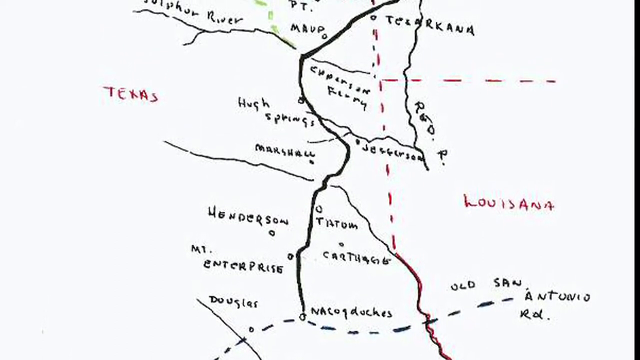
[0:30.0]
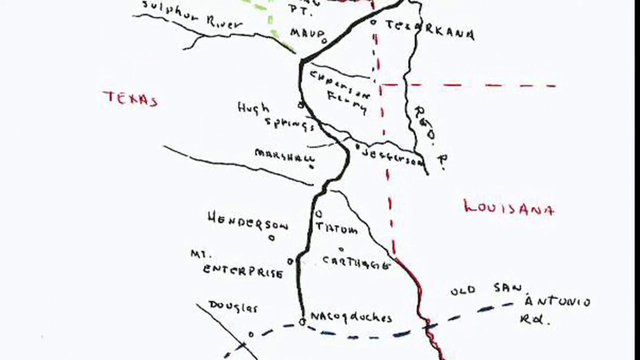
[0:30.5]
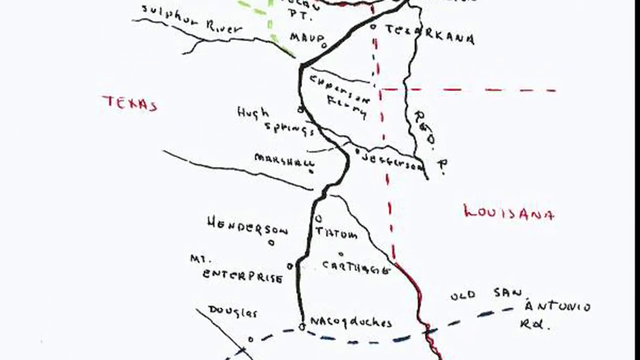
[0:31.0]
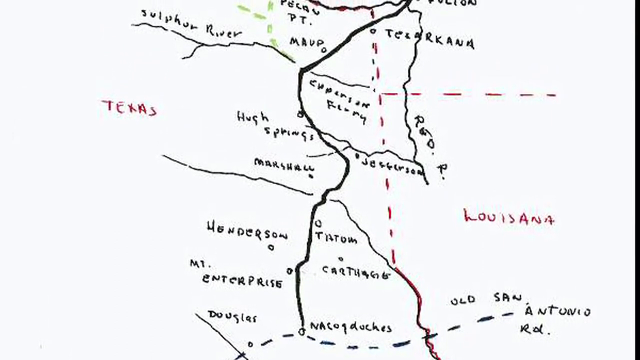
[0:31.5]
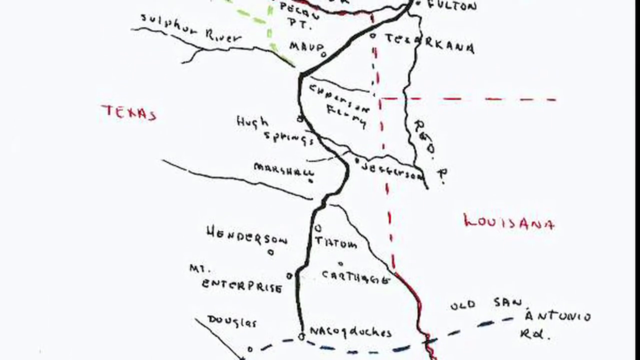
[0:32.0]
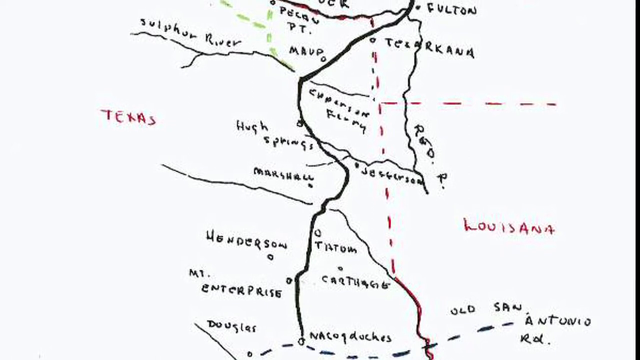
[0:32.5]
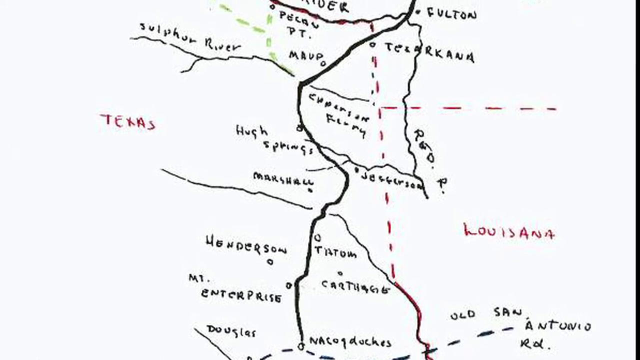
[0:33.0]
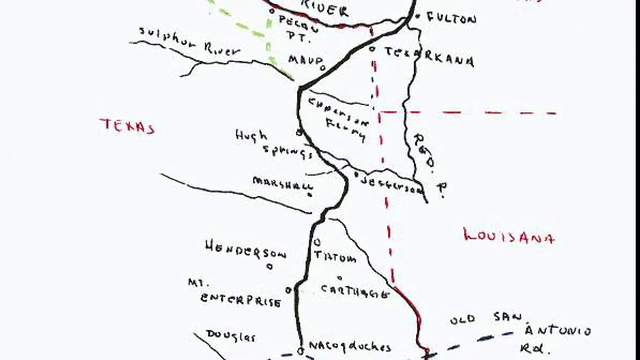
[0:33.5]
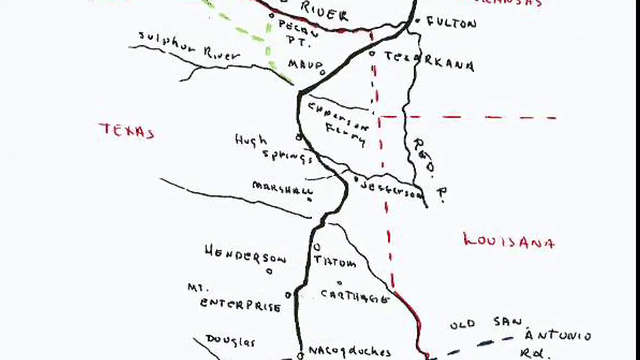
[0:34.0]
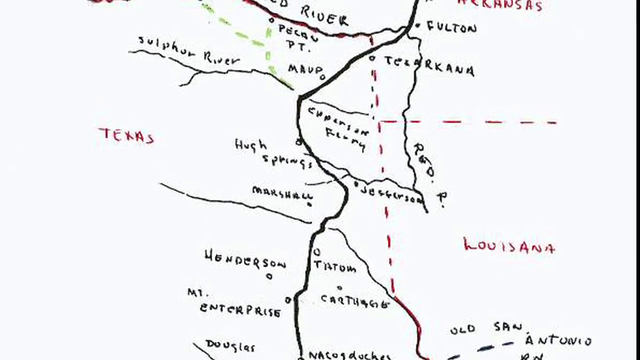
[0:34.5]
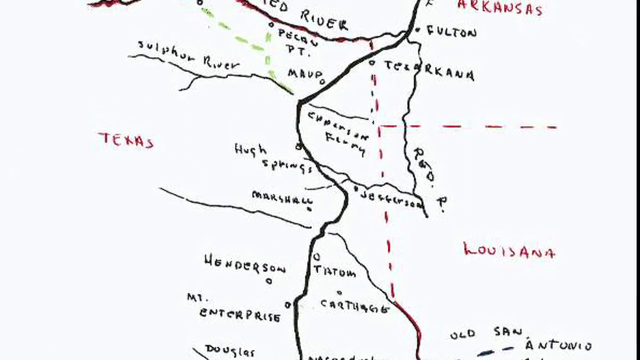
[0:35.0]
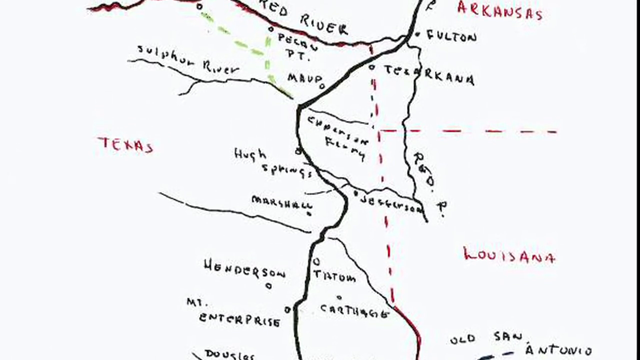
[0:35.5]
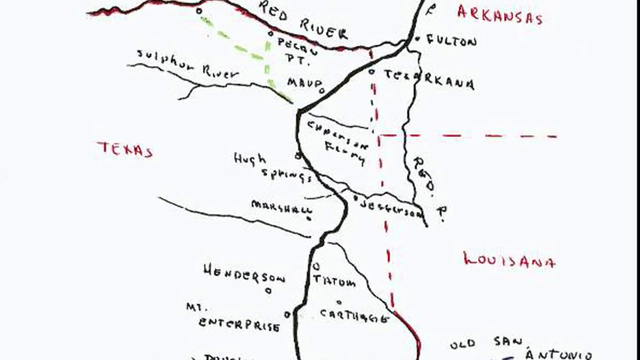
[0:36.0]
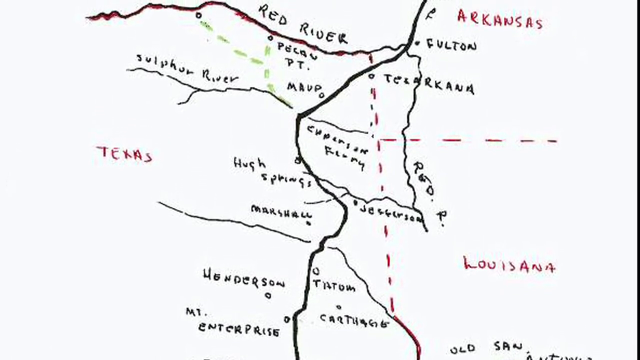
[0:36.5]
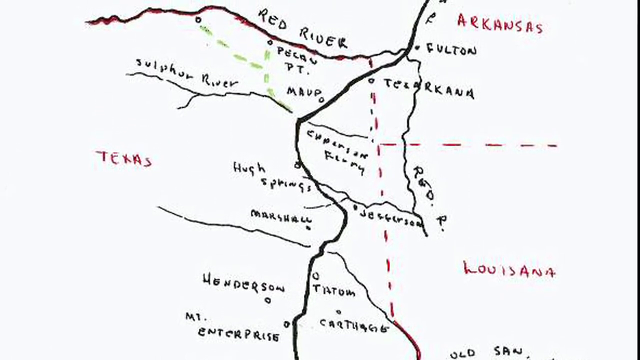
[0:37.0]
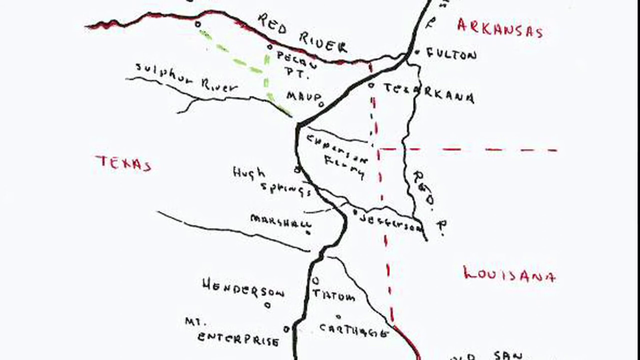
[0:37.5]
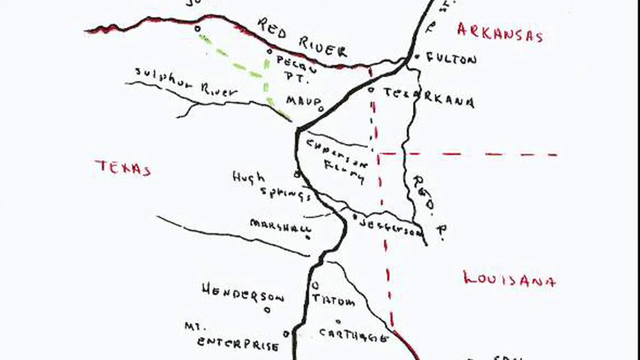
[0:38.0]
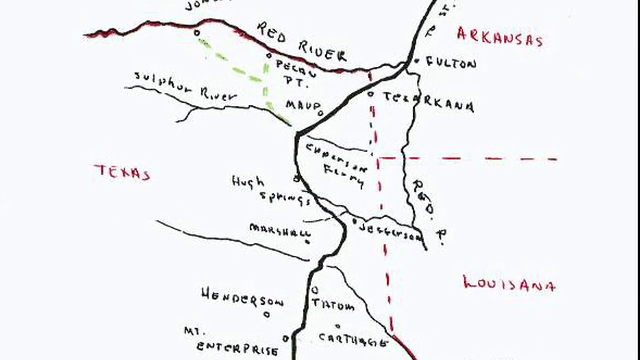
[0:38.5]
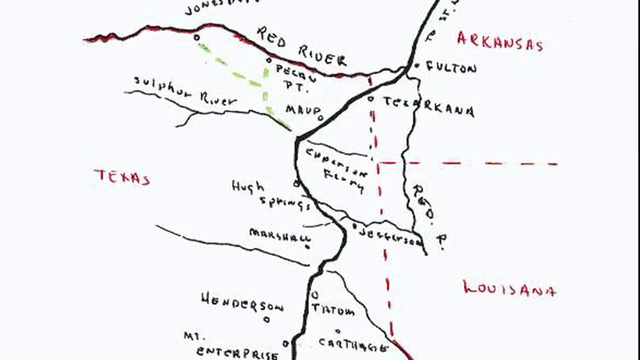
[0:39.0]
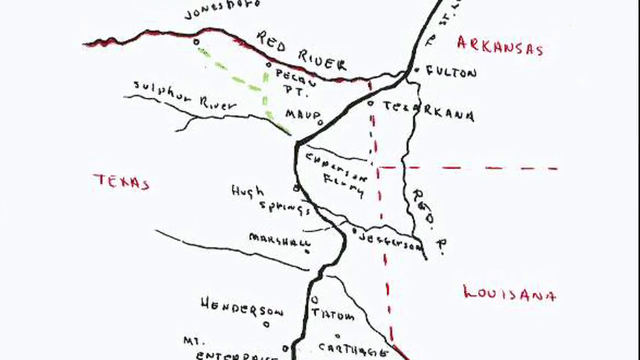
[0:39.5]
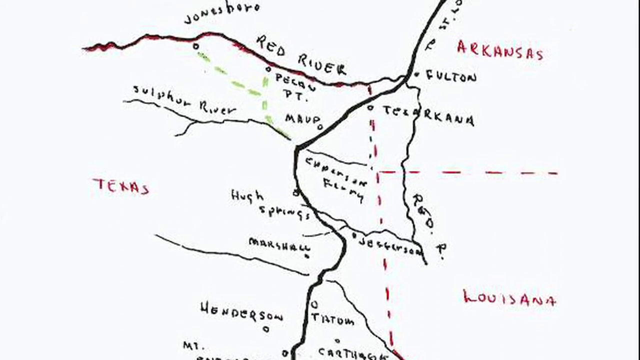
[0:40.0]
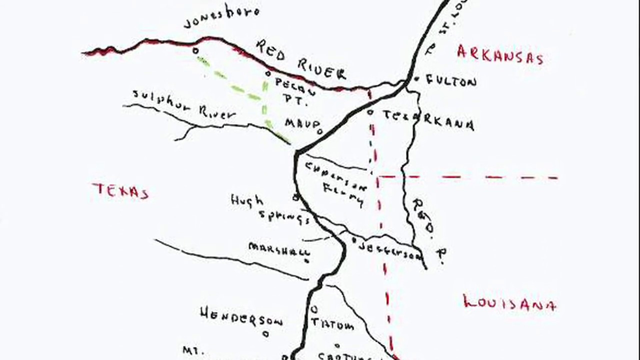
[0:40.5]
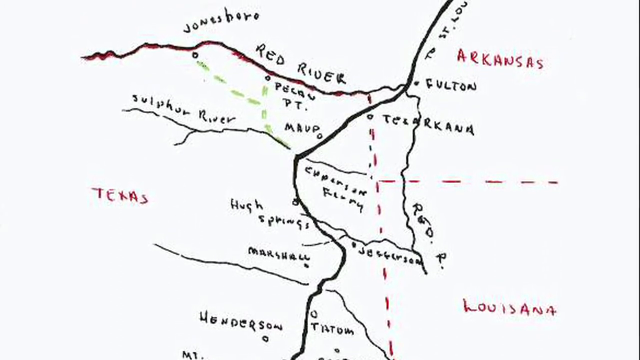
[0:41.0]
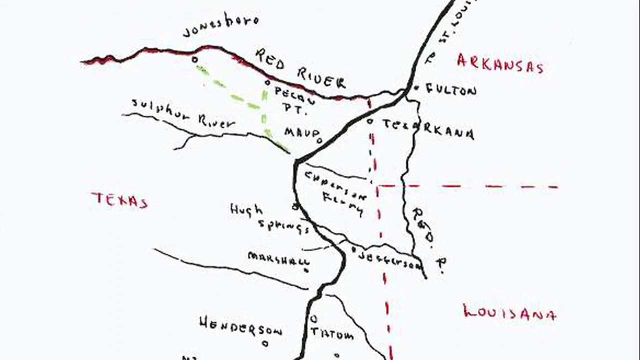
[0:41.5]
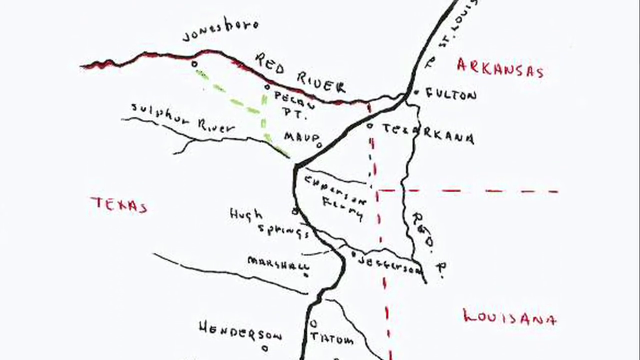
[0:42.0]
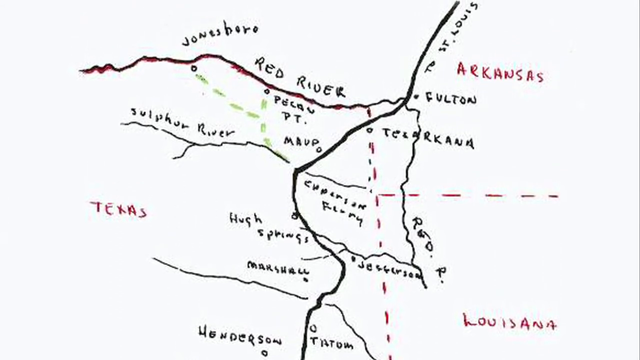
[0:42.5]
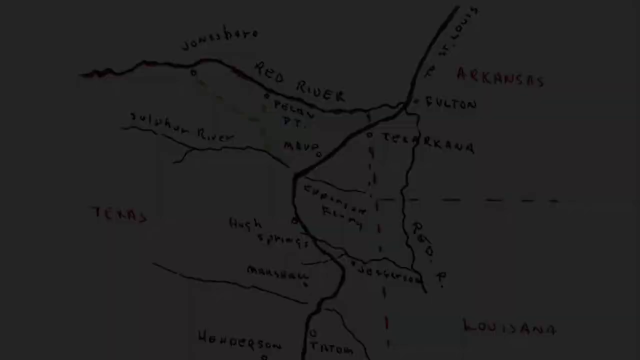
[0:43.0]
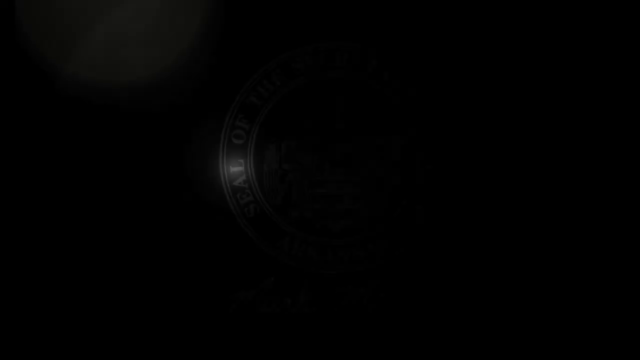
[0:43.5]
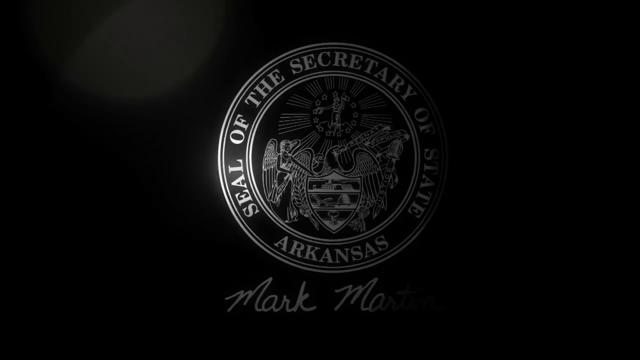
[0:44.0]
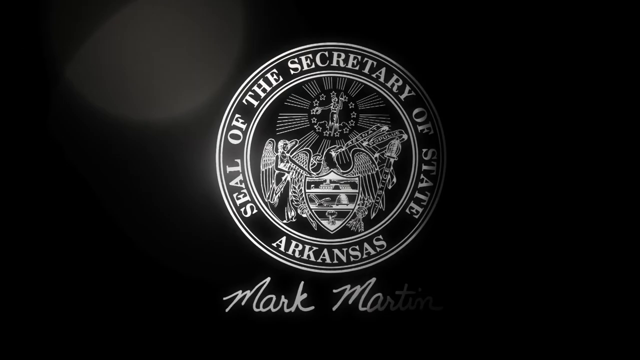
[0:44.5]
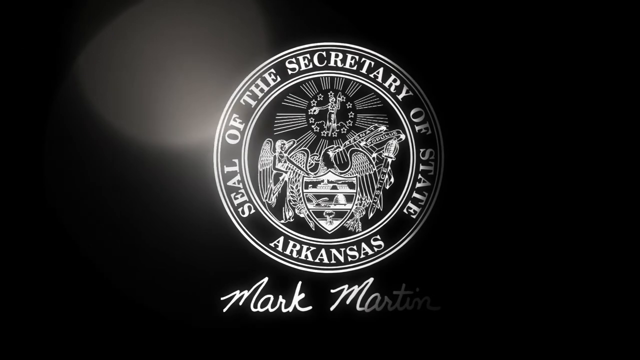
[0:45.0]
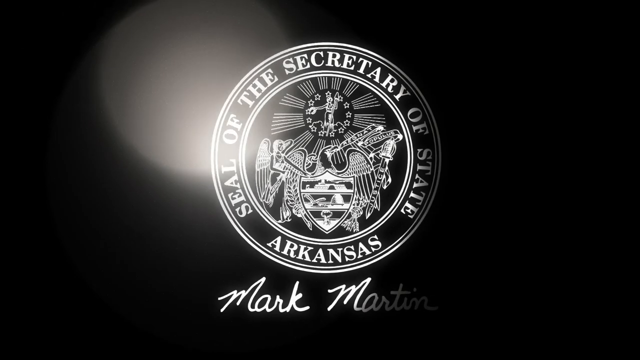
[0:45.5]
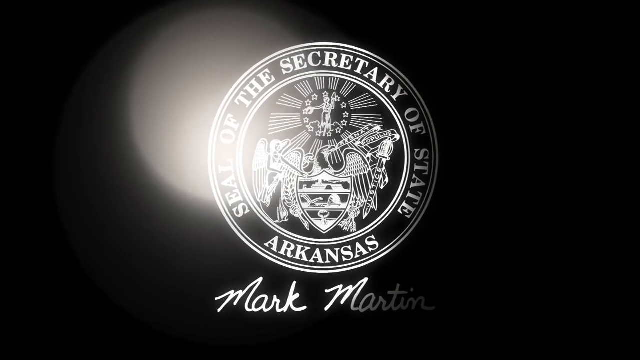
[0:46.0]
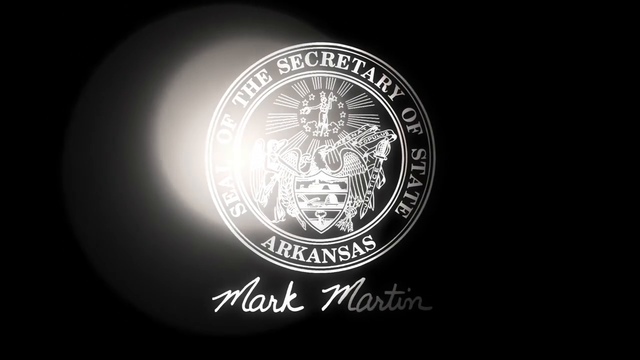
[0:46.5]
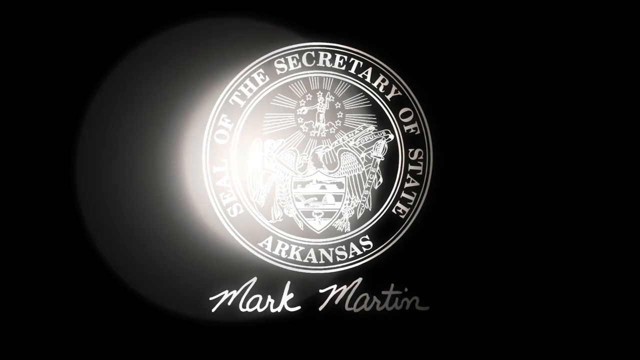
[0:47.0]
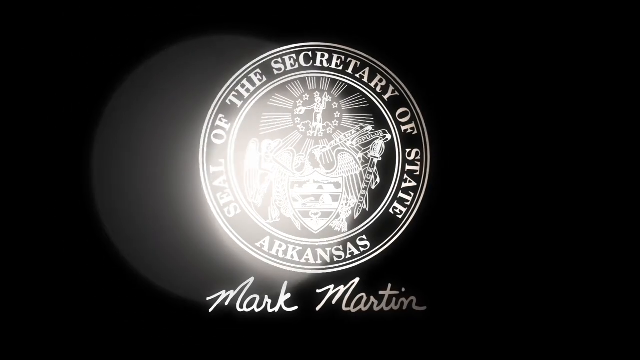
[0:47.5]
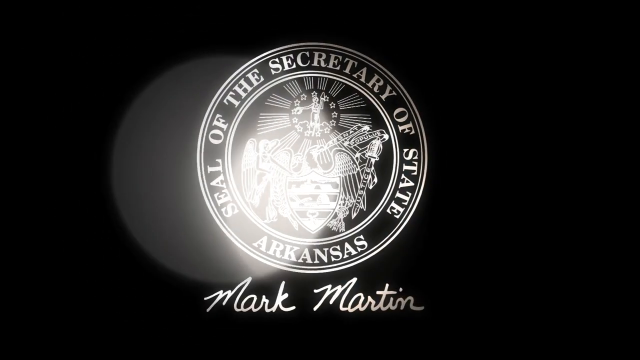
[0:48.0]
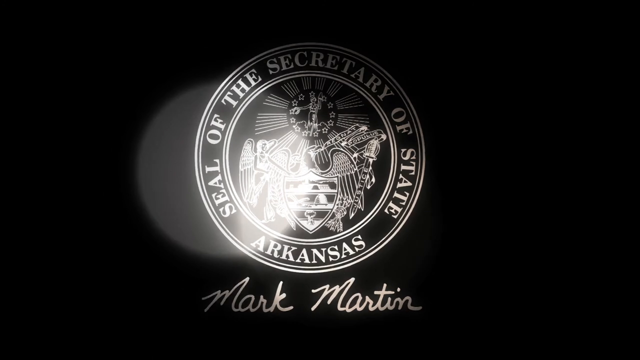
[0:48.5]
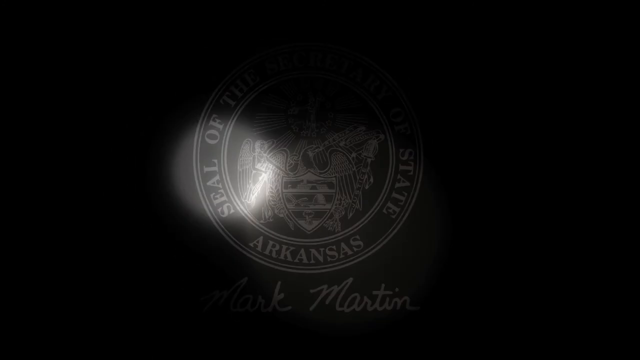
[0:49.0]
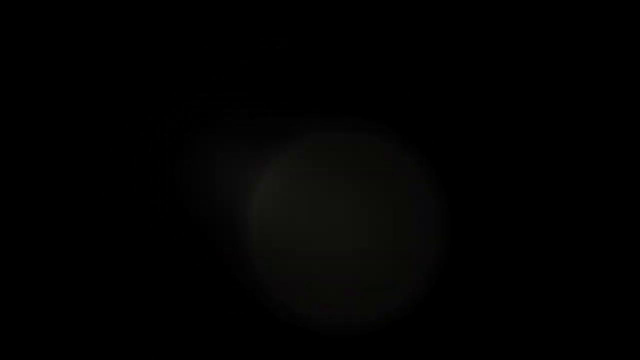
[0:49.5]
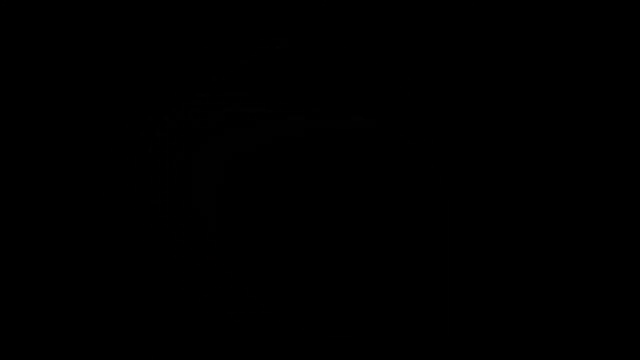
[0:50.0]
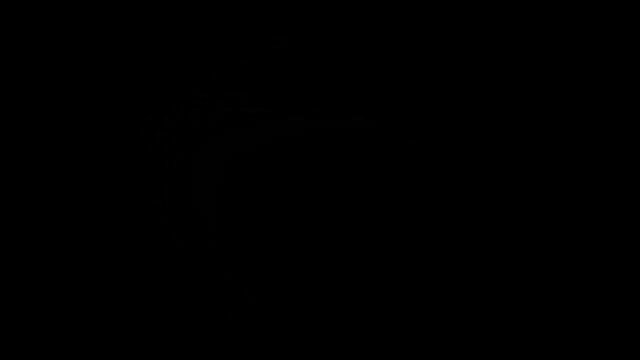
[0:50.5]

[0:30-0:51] The hand-drawn map continues, apparently showing the U.S. states of Texas and Arkansas, whose names are written in red. Areas between them, some possibly in Arkansas and some possibly in Texas, are drawn in black. The places do not seem to be cities or places where people live, but seem to be natural features such as rivers and possibly other important locations: the Red River, Jones Borough, the Sulphur River, Texarkana, Cath and Prairie, Hughes Springs, Mesh Junction, apparently Chiltern, and St. Louis.